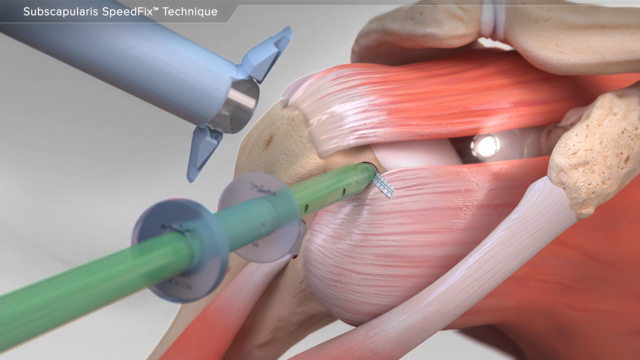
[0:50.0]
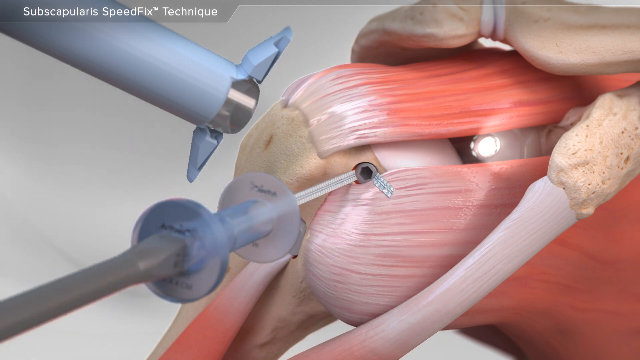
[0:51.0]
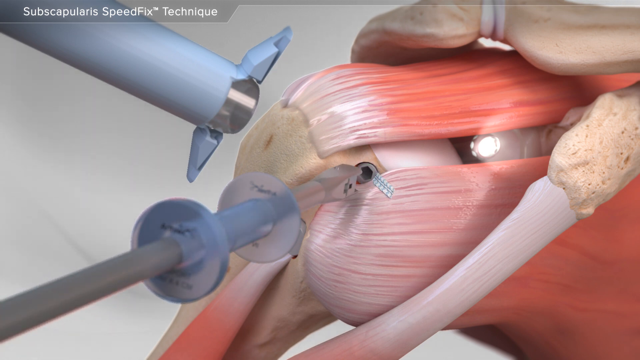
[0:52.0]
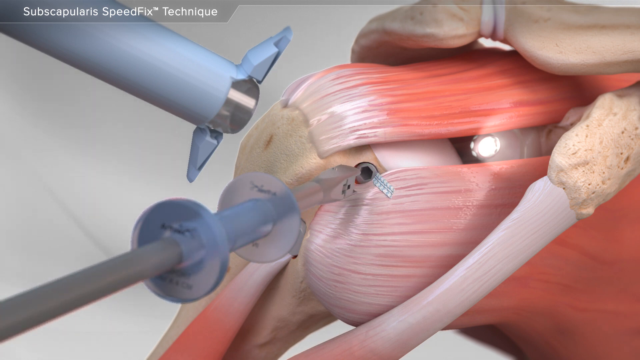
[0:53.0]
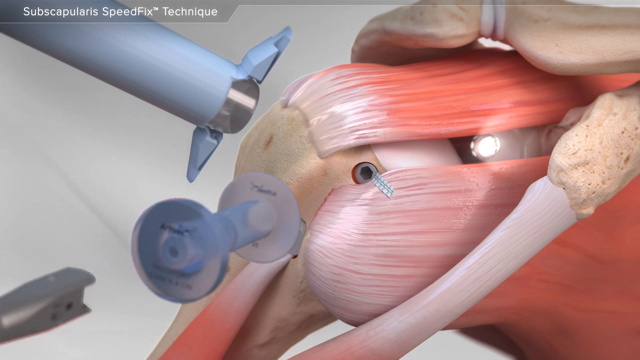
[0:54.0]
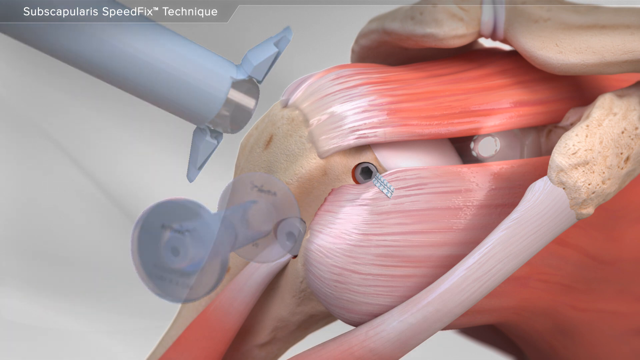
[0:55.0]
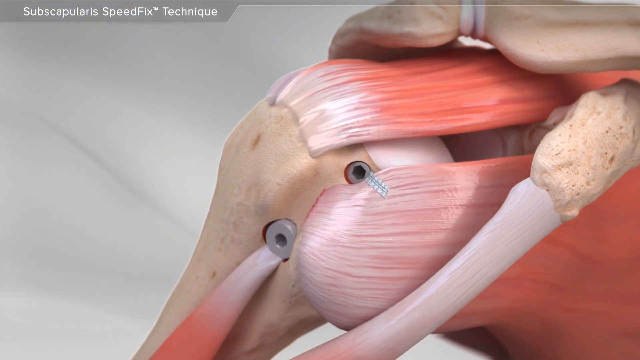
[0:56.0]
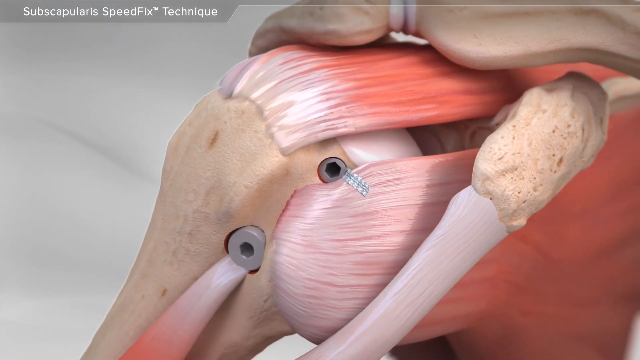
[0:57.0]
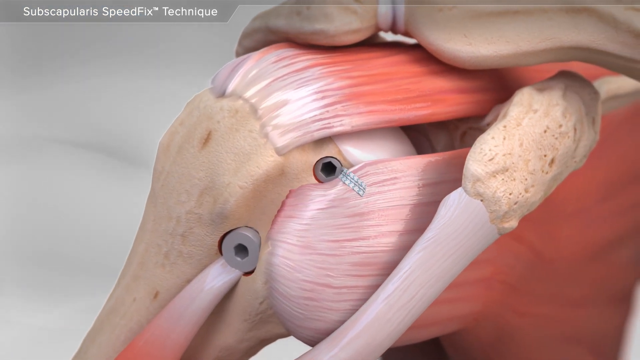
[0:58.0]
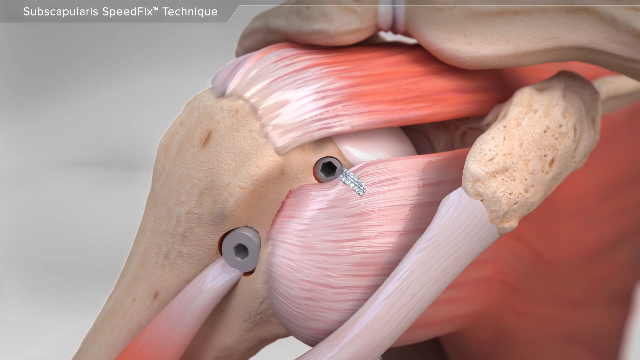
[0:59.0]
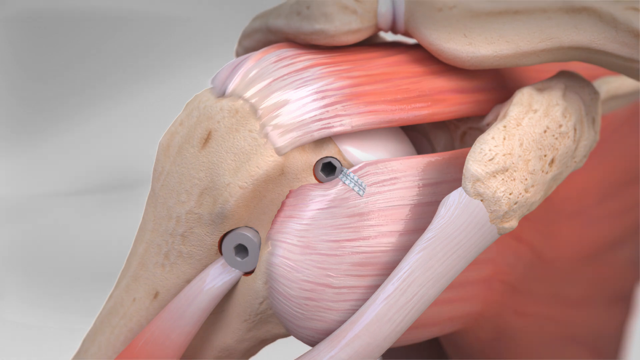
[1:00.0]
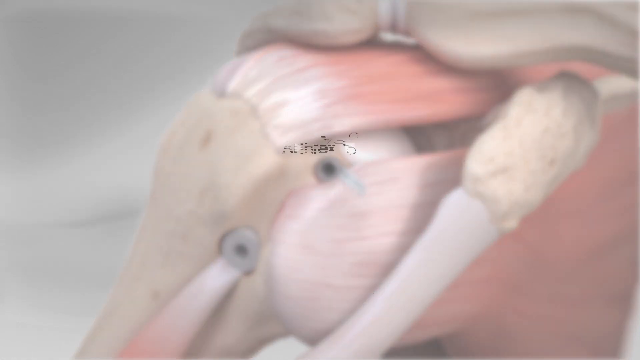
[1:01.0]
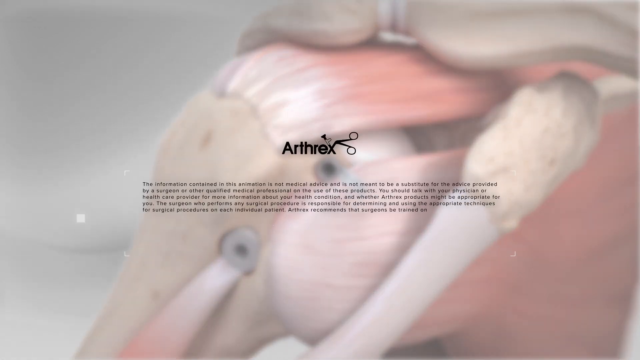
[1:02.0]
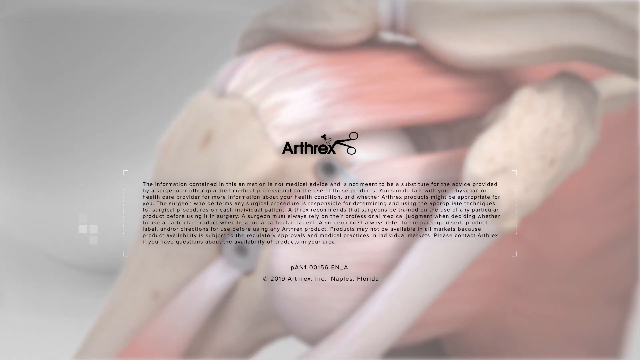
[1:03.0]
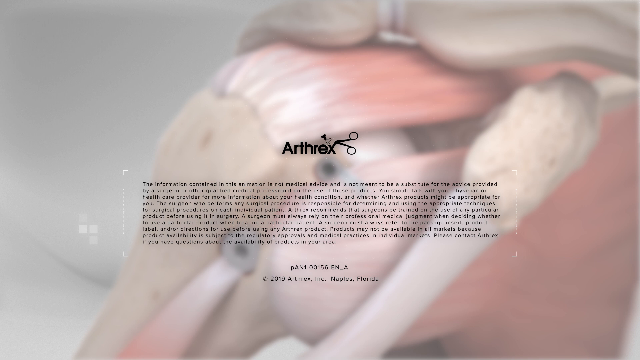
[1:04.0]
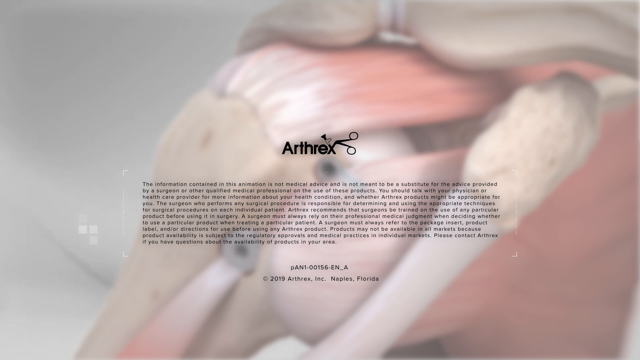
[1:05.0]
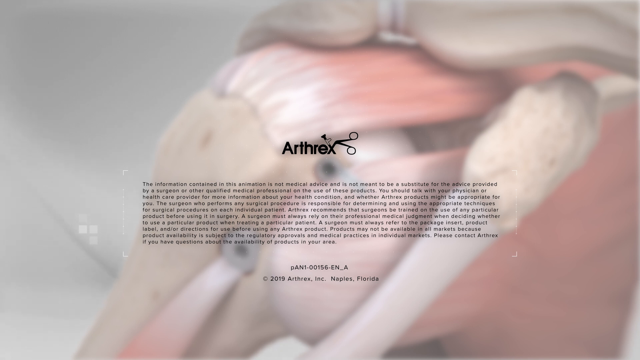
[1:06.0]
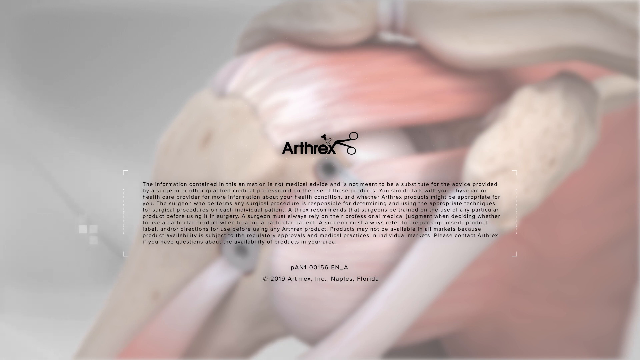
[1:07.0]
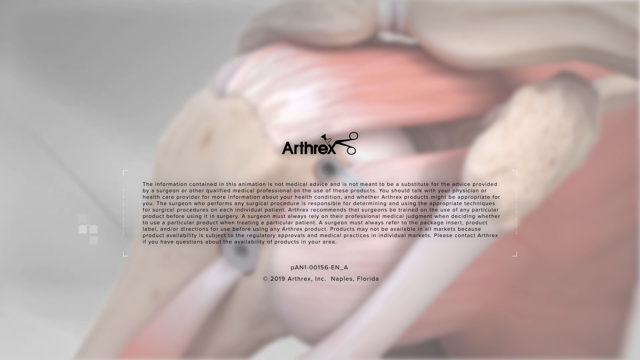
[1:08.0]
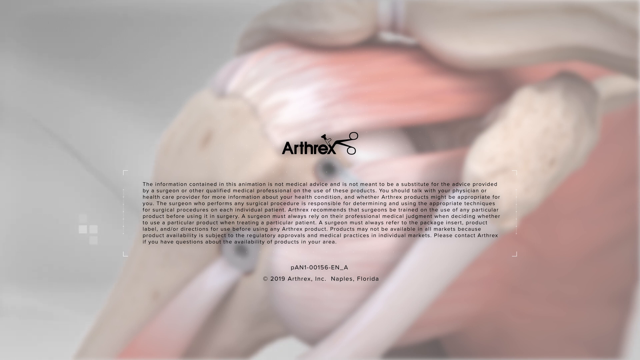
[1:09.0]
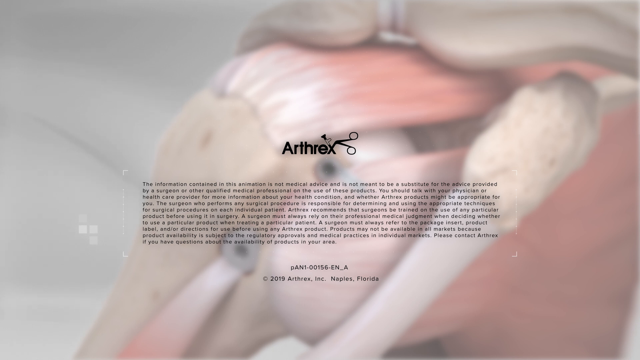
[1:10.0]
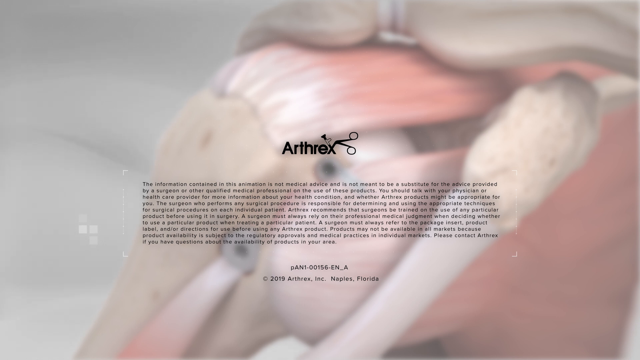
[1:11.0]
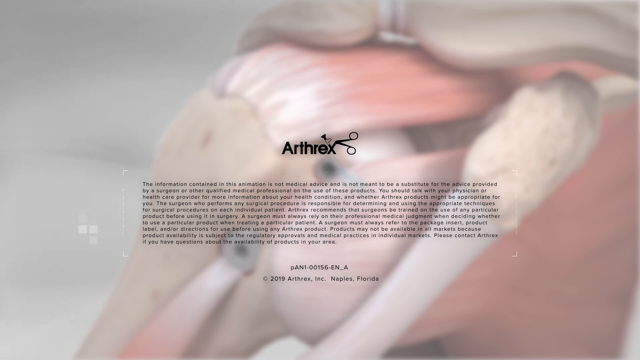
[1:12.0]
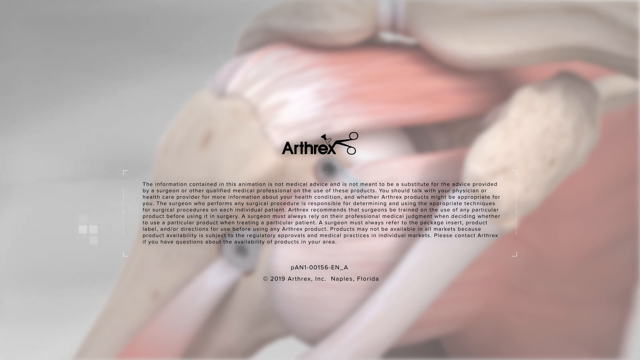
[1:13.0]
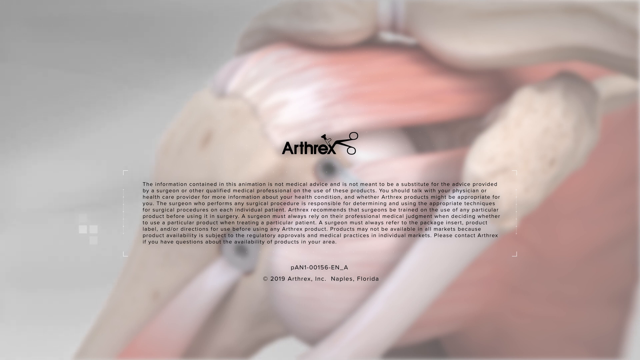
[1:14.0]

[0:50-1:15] An animation of a surgical procedure shows, on the right side, a very up-close view of the interior of the human shoulder, with bones and muscle. In the upper left corner, small lettering on a dark gray background reads "subscapularis speed fix TM technique". The procedure looks like a laparoscopic one, with blue metal instrument arms coming in from the left side. At the bottom, the one coming through on the left side has green on it, and this green instrument is used to attach the muscle to the bone with a small, what looks like metal clip, suturing it to the bone. The video then transitions to text overlaid on top of the image: in black it reads "Arthrex", followed by very small lettering, almost impossible to read, about the video and animation, including numbers, a copyright and "Naples, Florida".